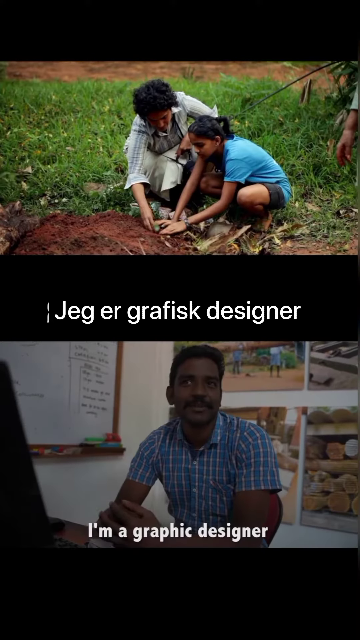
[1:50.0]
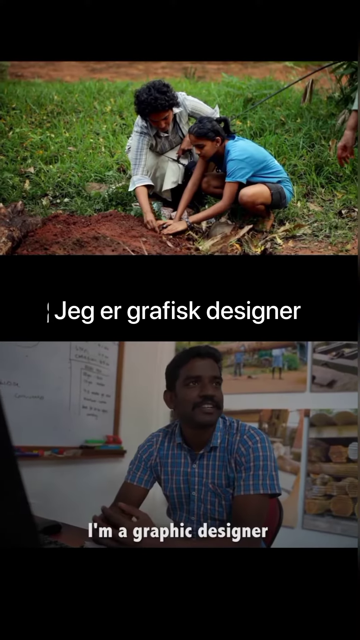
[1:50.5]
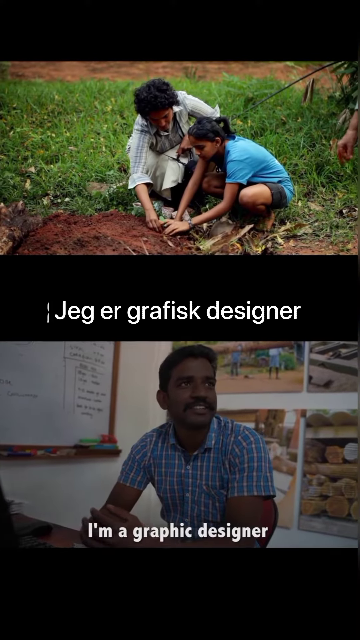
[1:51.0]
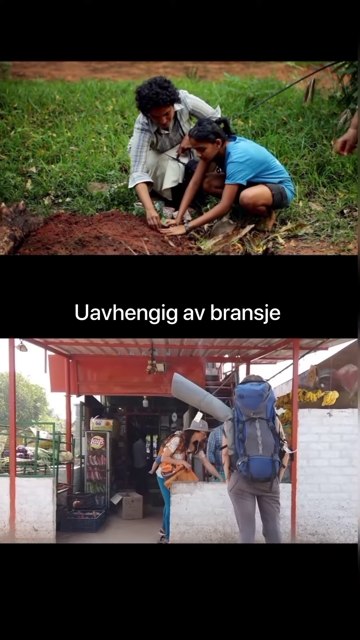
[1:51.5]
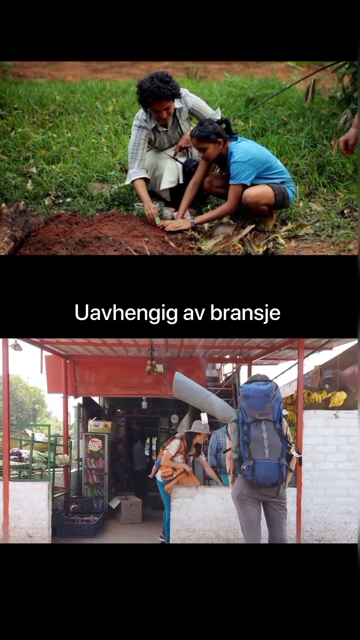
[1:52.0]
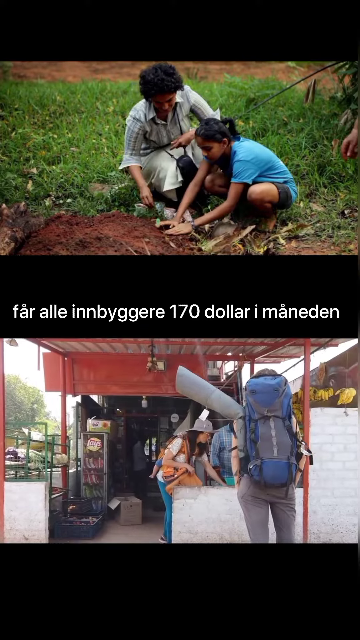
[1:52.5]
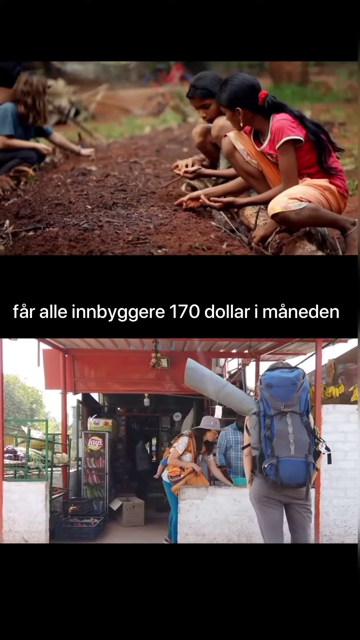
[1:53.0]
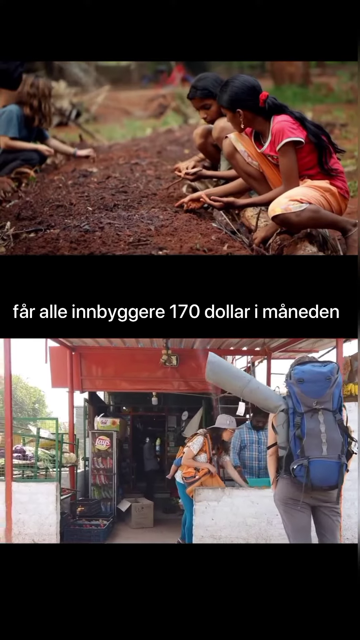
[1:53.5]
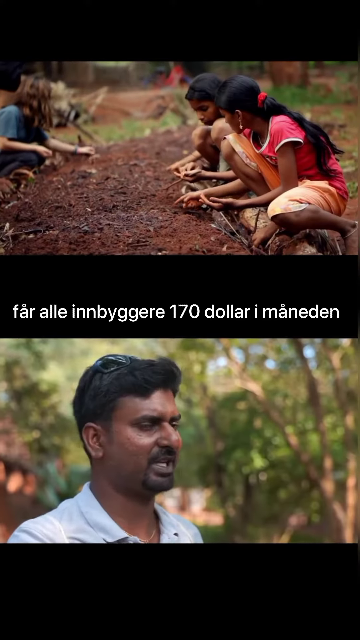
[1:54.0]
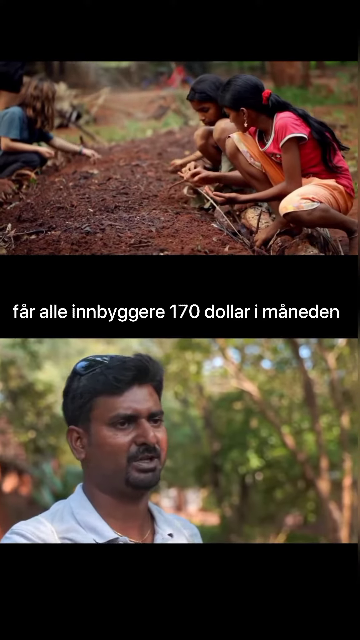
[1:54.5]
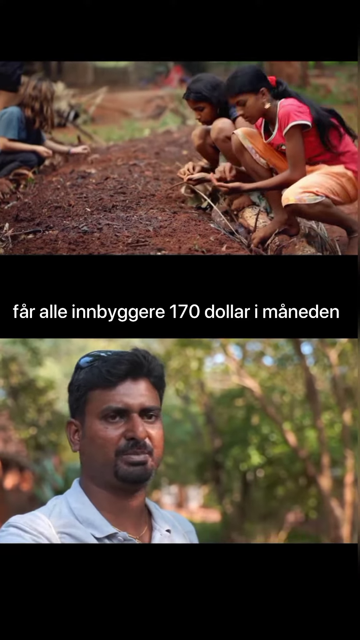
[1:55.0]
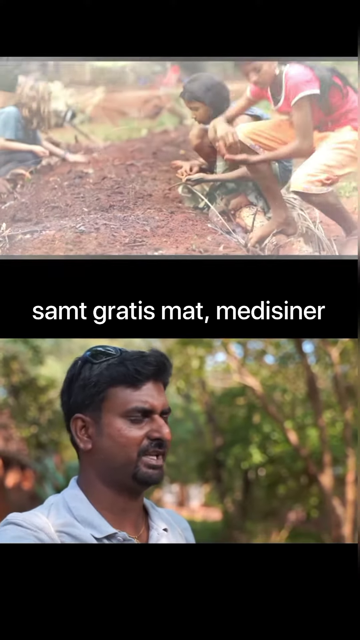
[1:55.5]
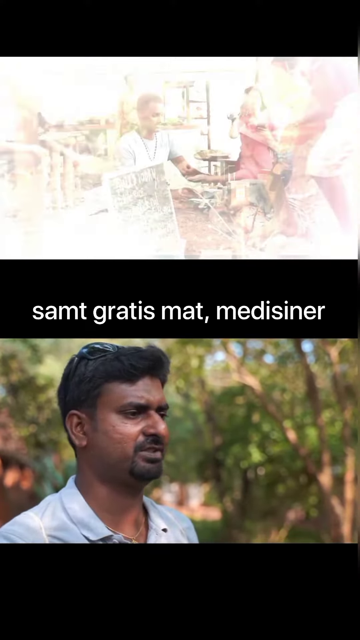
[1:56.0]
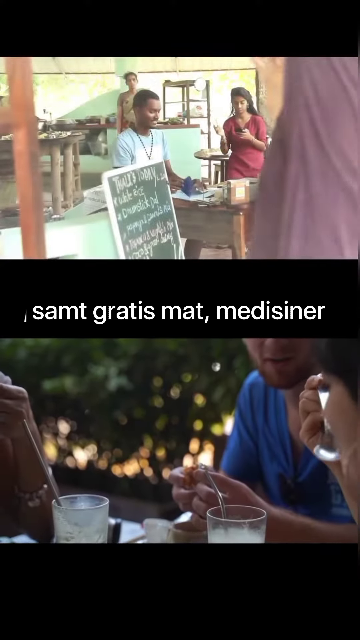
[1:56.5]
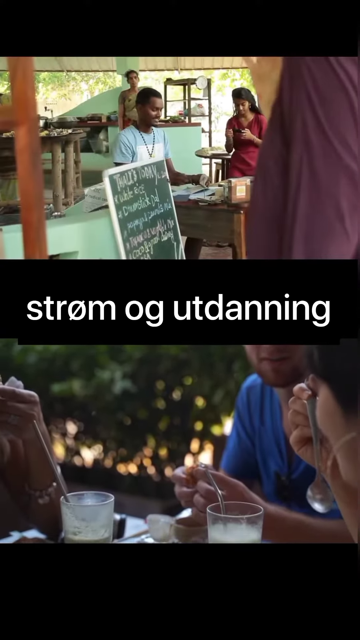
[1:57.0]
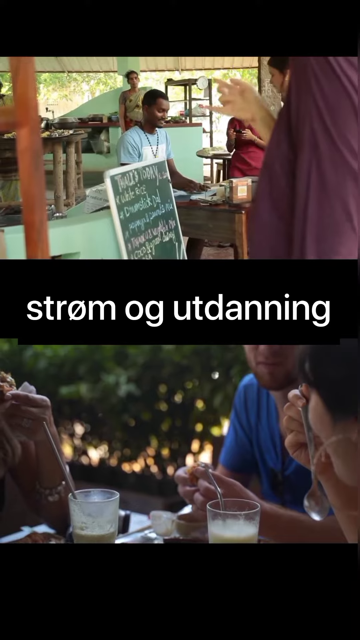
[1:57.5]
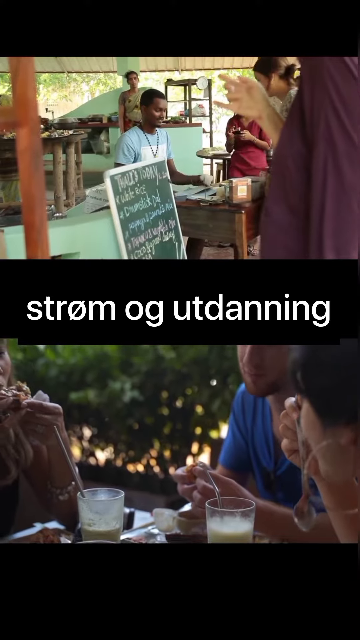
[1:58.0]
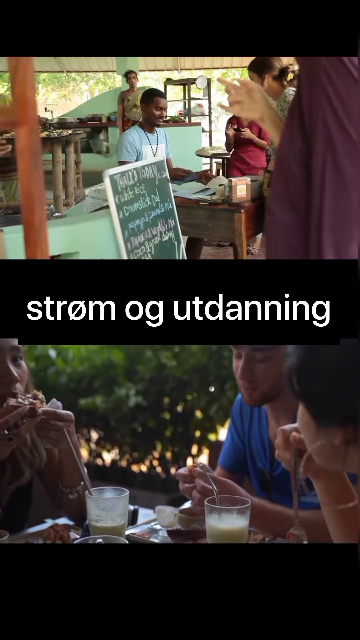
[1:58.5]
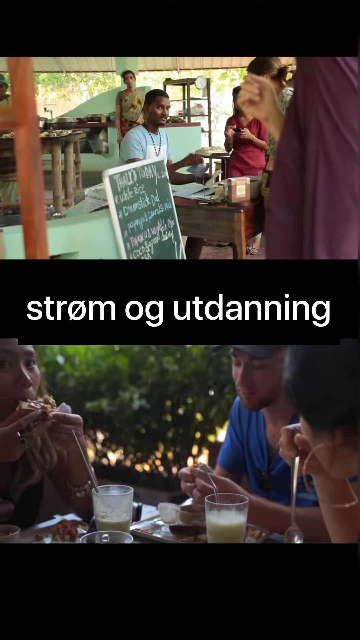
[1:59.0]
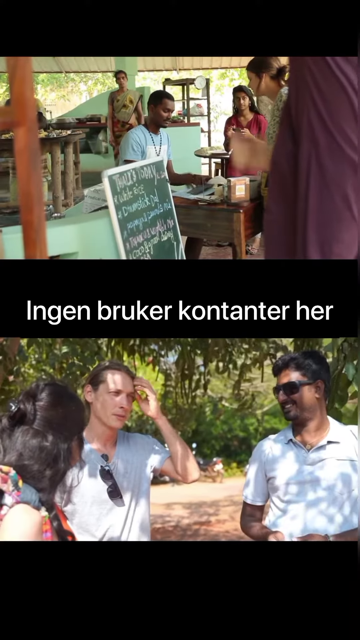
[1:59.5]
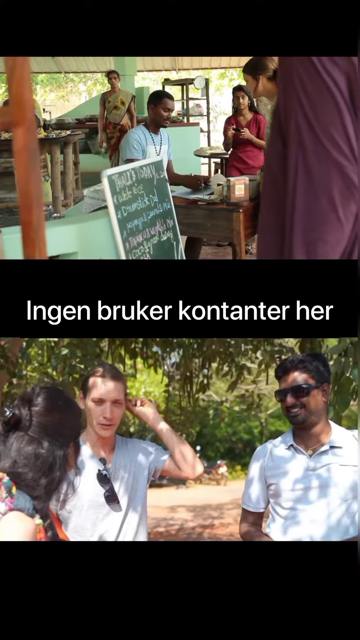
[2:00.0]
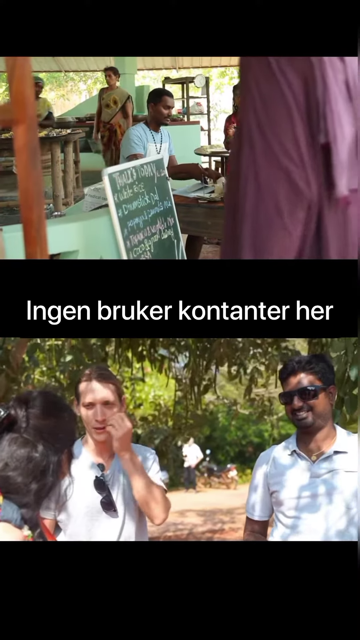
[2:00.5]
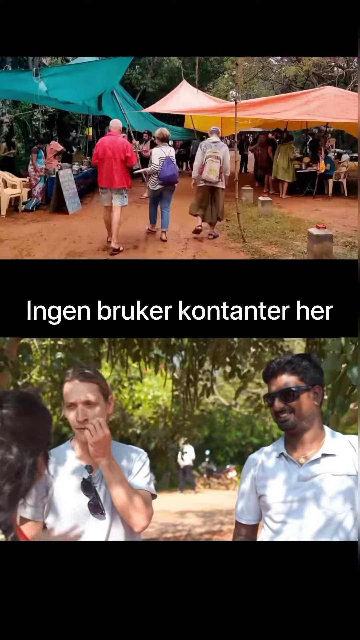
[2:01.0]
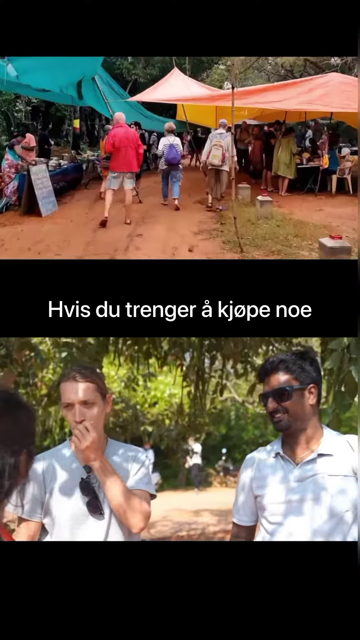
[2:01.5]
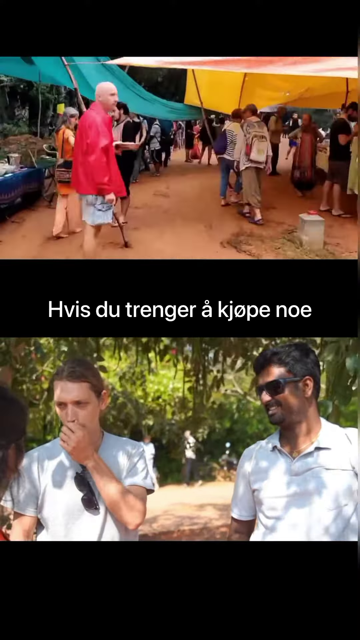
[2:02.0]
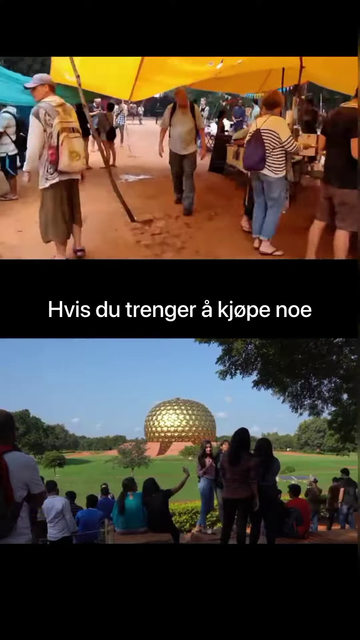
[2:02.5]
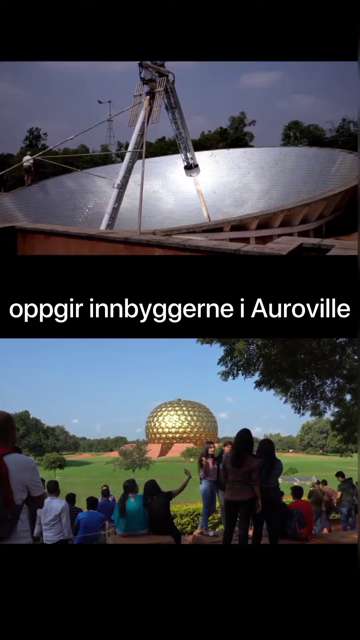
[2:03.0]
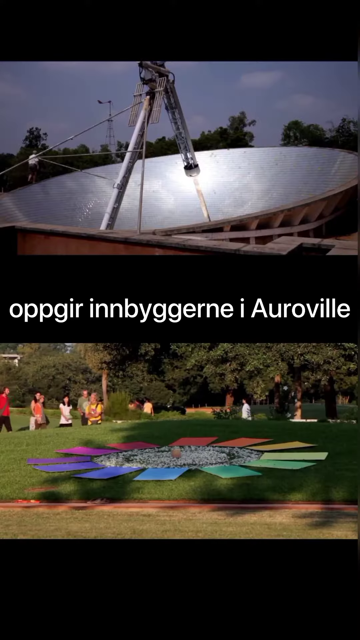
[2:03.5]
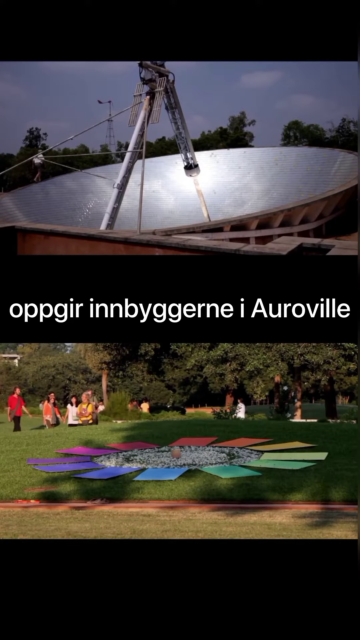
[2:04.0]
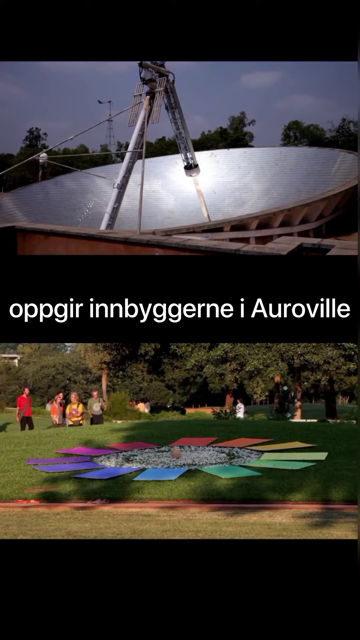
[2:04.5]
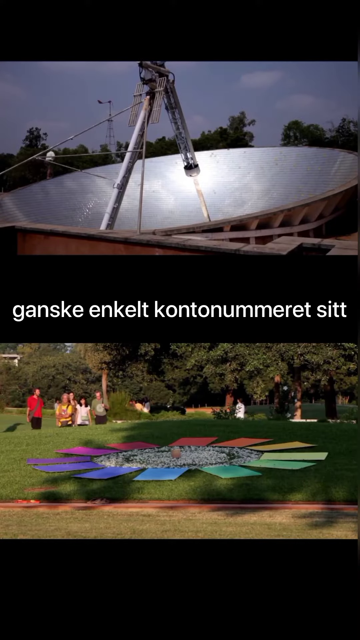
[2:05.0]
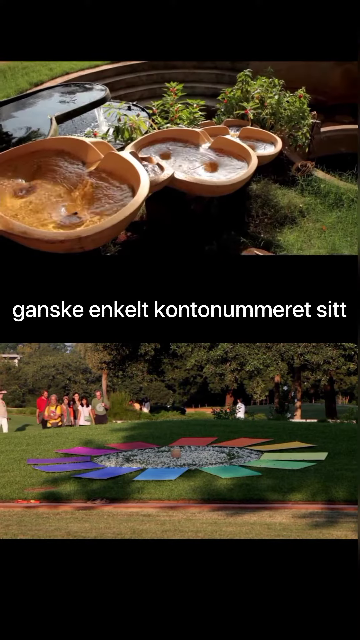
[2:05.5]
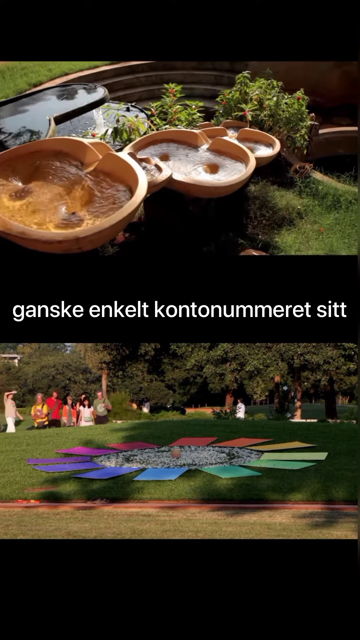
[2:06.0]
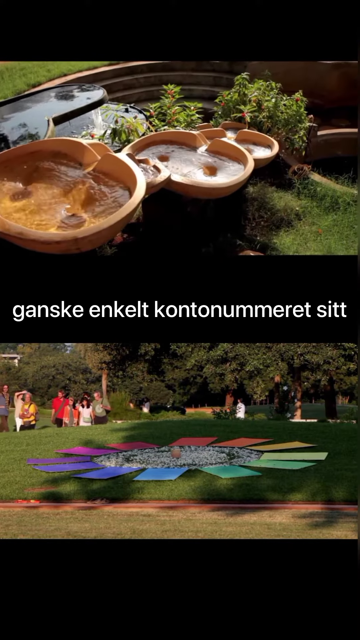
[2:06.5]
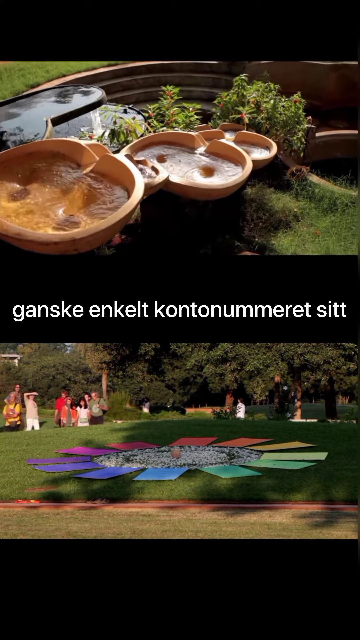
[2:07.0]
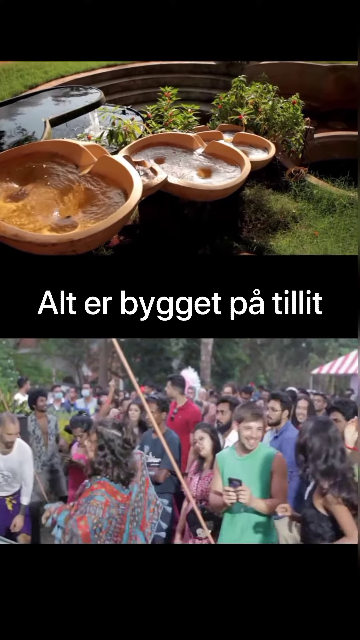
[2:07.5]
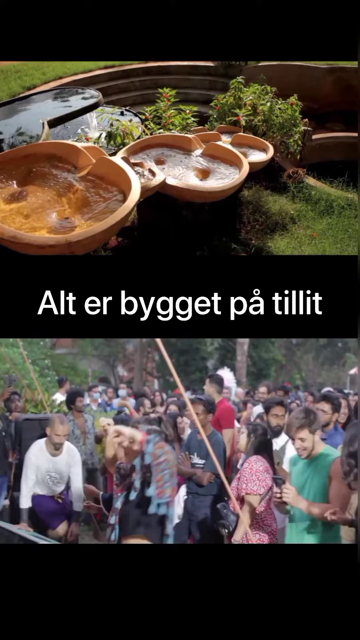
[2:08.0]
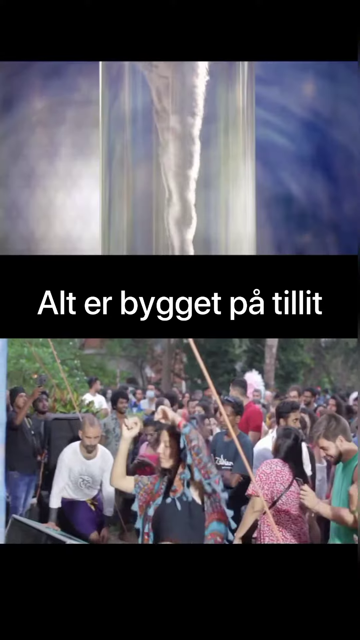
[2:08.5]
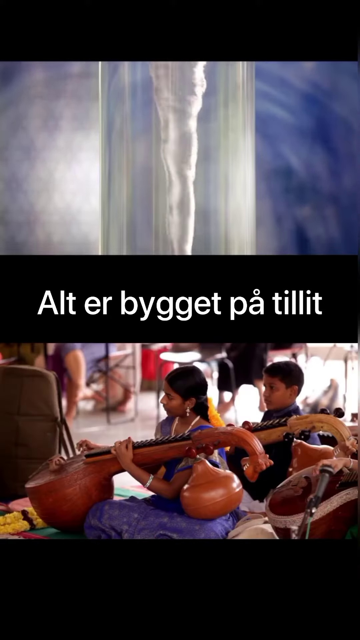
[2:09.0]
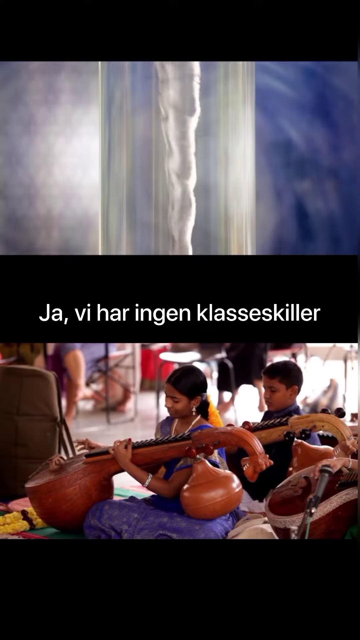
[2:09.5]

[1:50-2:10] A man keeps talking in the lower half while the top half shows other people doing activities. There seems to be a large market, and there is a huge satellite dish. The man says he is a graphic designer. There is a lot of grass with things placed on it. People play what might be a sitar, and people build gardens.